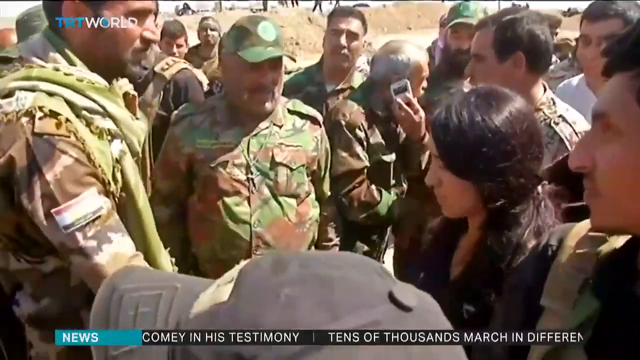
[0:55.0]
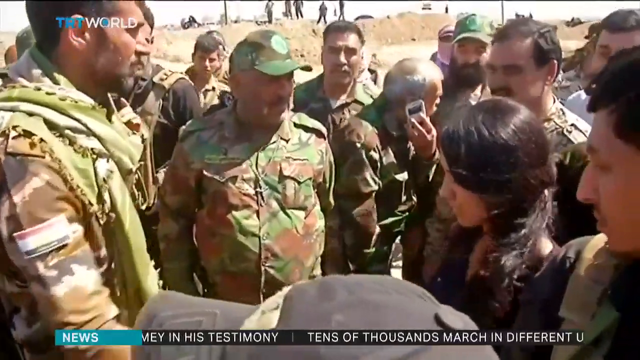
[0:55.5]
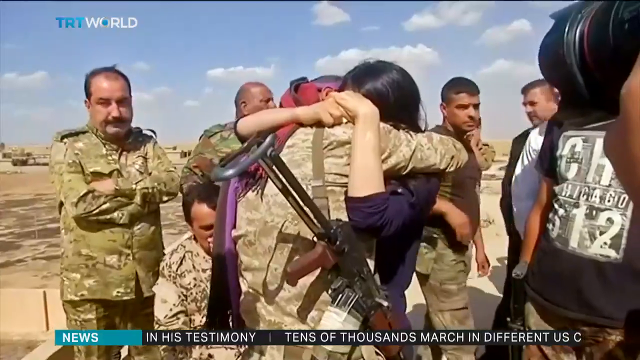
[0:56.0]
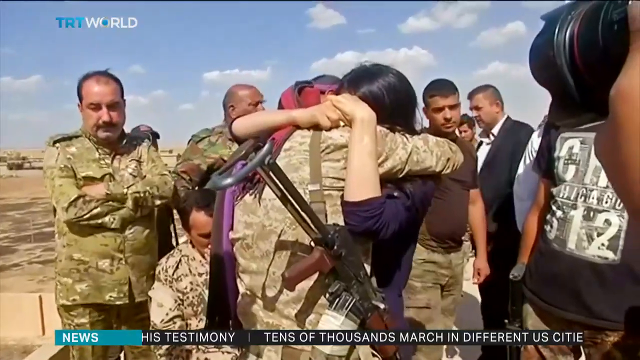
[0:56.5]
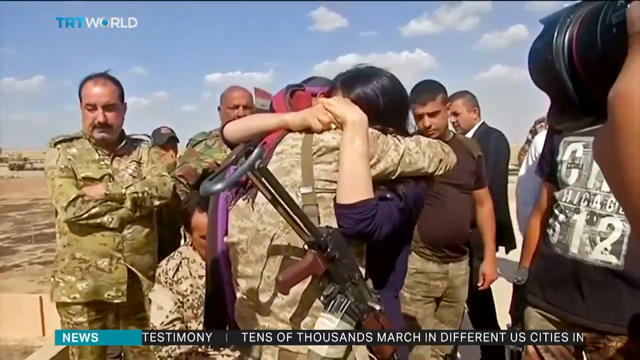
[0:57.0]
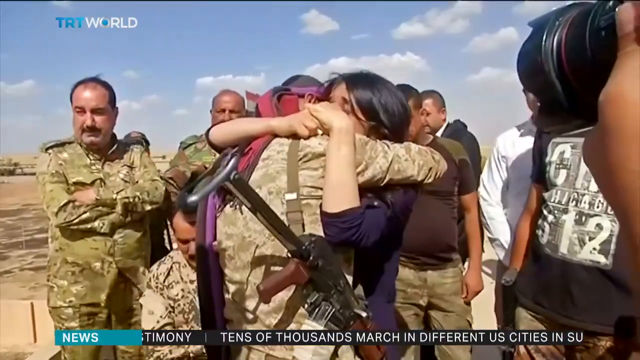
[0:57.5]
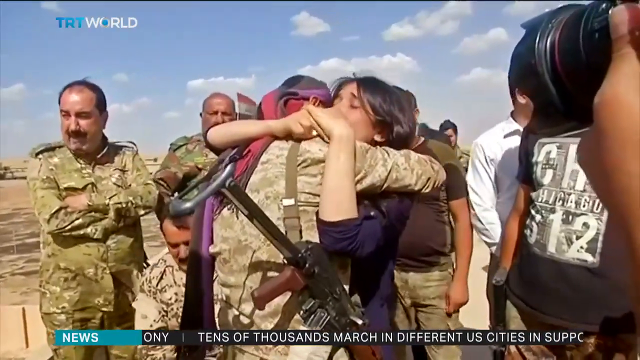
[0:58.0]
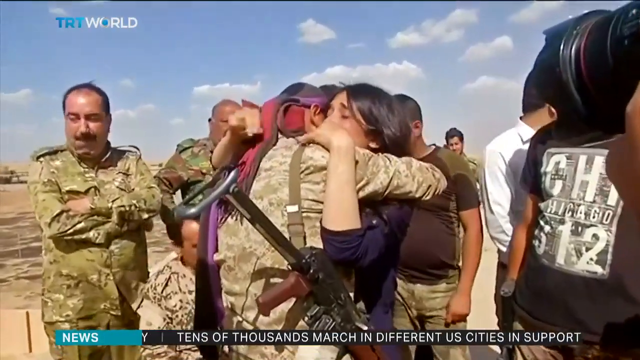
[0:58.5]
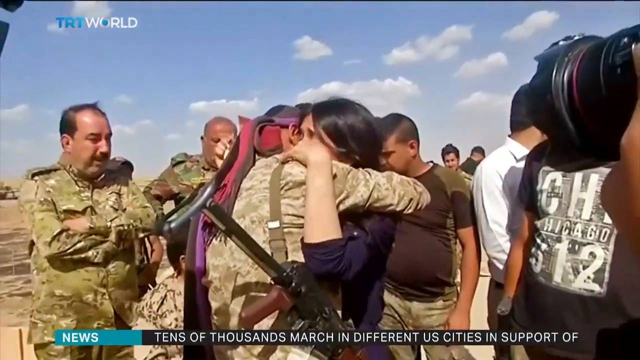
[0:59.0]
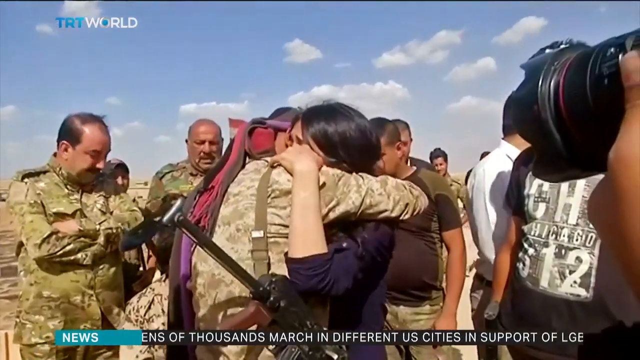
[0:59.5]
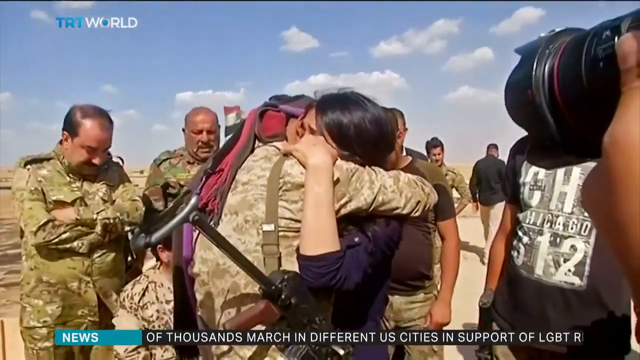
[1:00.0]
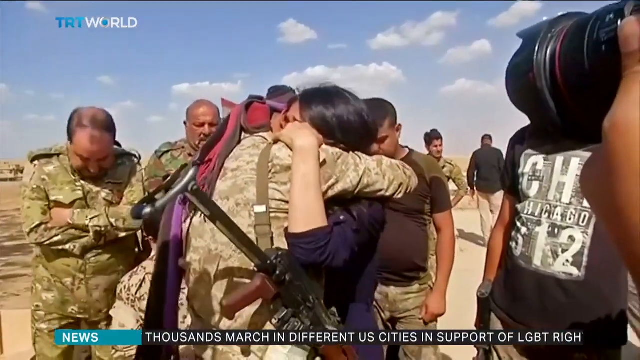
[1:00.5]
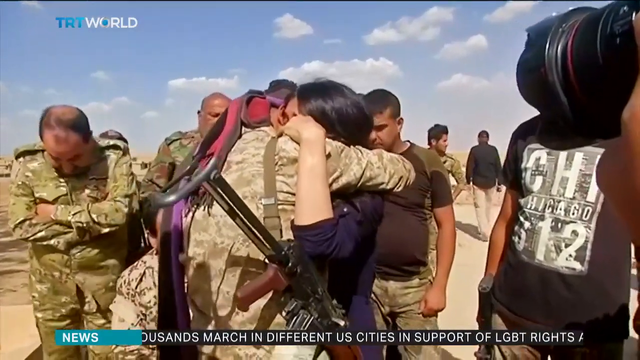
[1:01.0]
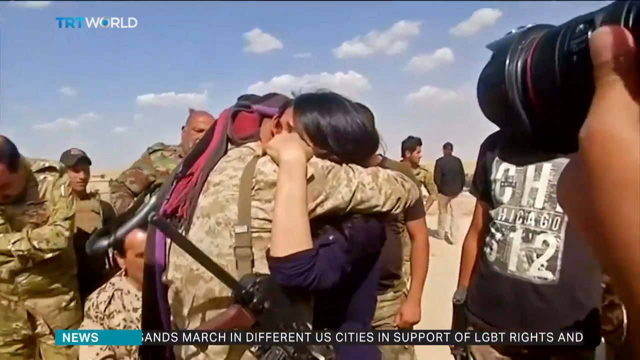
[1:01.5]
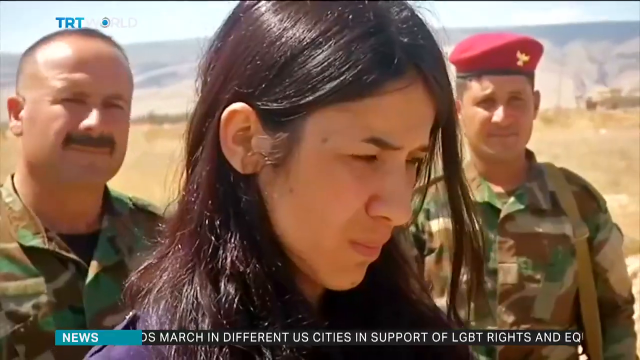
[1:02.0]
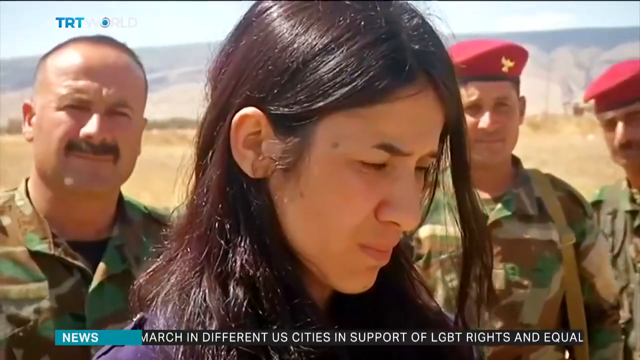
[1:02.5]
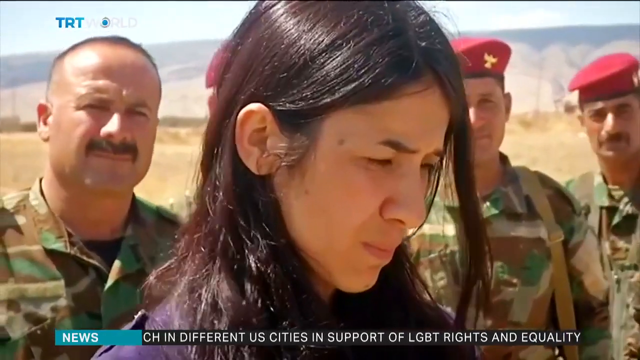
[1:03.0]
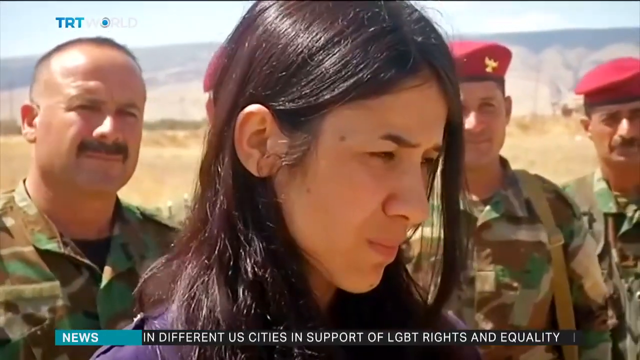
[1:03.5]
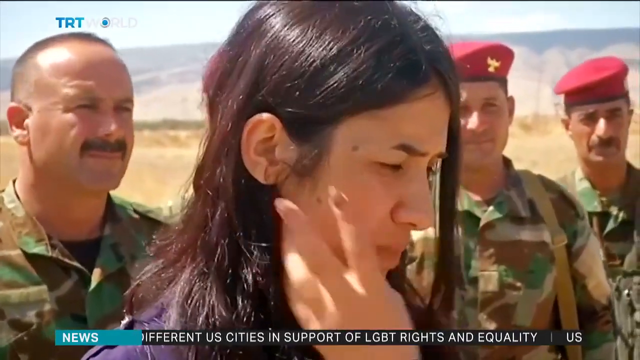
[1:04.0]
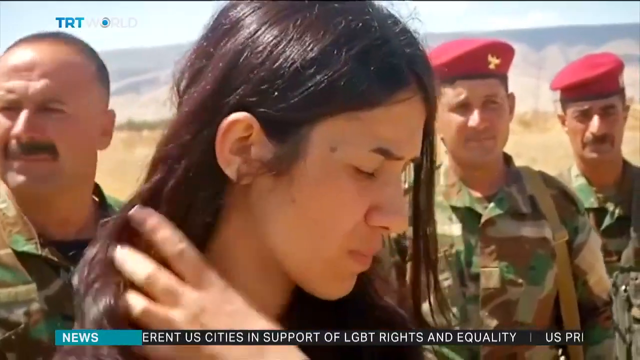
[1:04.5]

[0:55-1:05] The formerly enslaved woman, with long, glossy, dark hair and tan skin, wears a dark navy dress with her sleeves pushed up to her elbows. She hugs a man in a long hug, and he embraces her in return; she looks relieved. The man wears combat attire, has a covering on his head and has a rifle on his shoulder. Several men surround them. At least three men behind her wear camouflage army combat attire and burgundy berets with a gold emblem. A man stands in a black t-shirt with black, gray and white lettering on the front and beige or camouflage pants; his right hand appears to be in his pocket, or it may be down at his side.